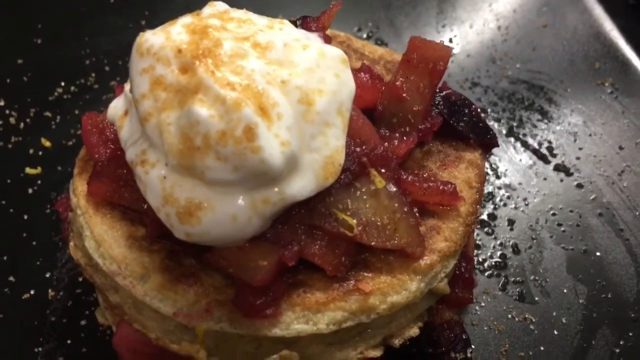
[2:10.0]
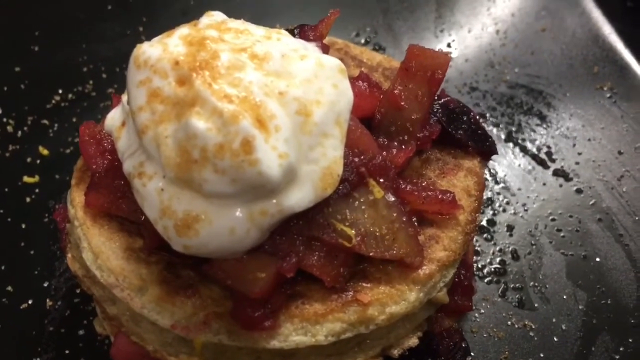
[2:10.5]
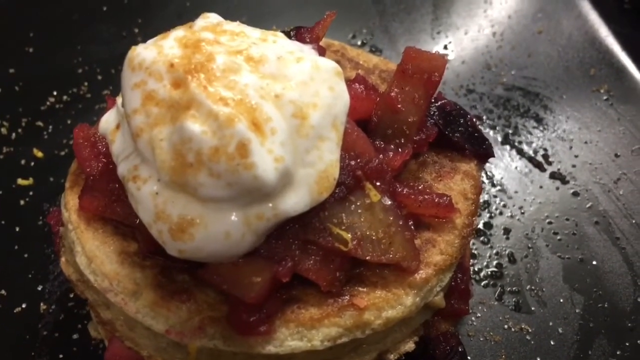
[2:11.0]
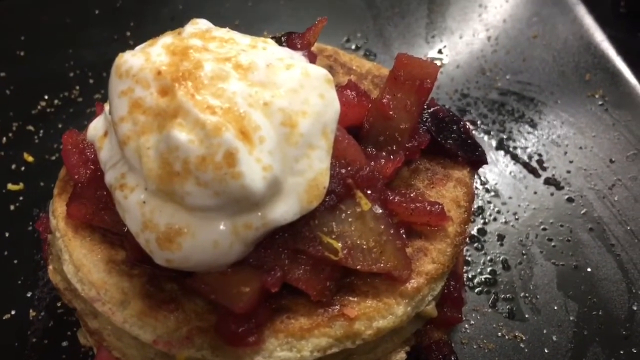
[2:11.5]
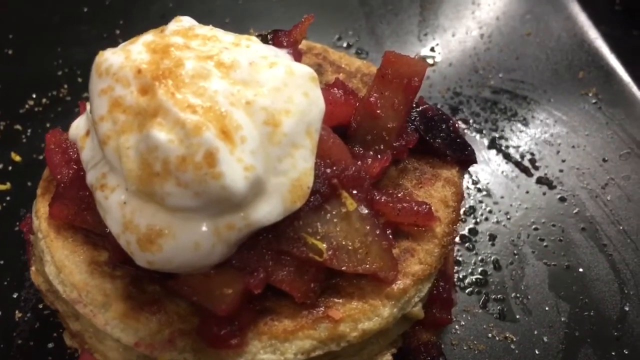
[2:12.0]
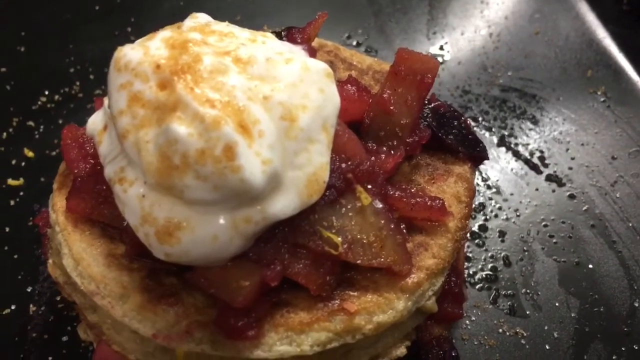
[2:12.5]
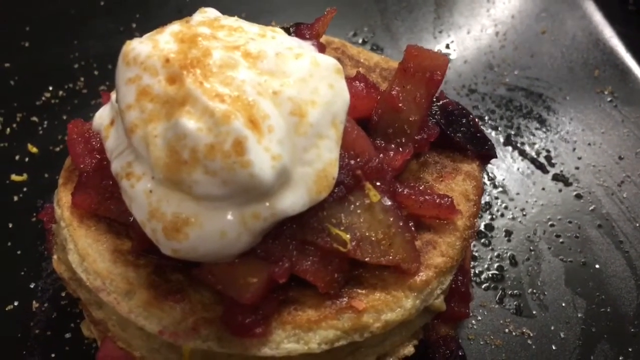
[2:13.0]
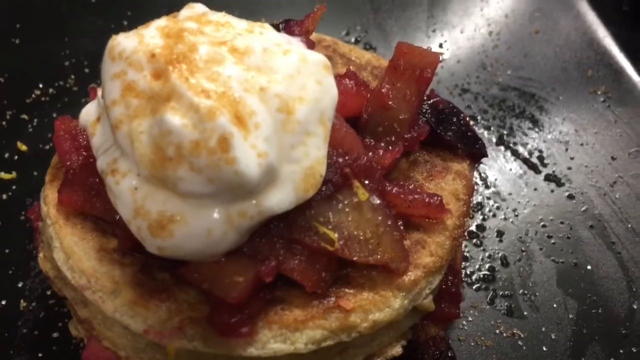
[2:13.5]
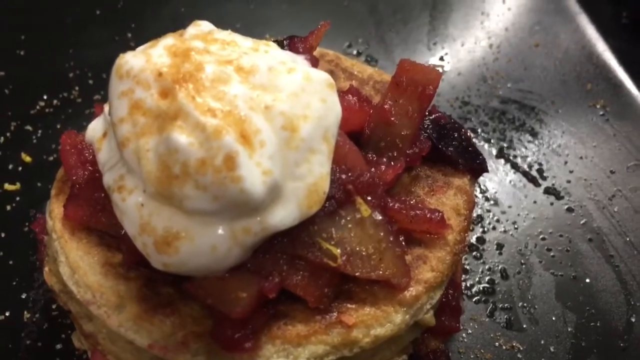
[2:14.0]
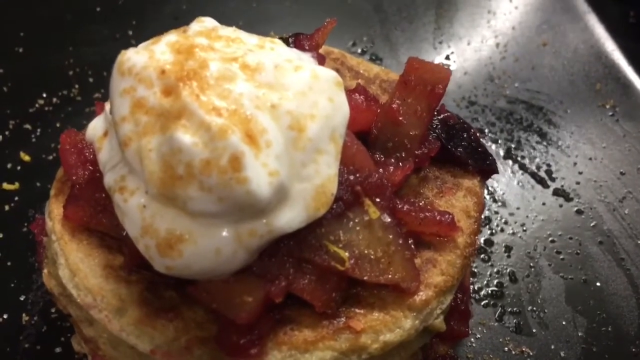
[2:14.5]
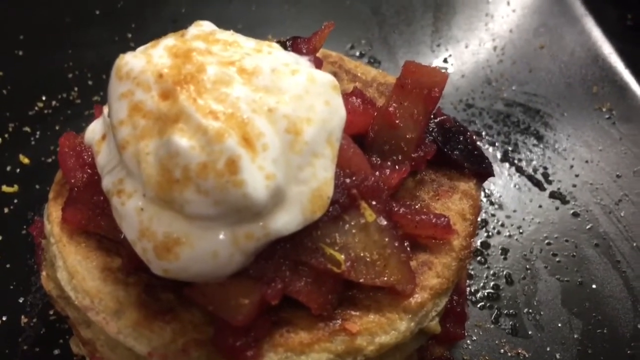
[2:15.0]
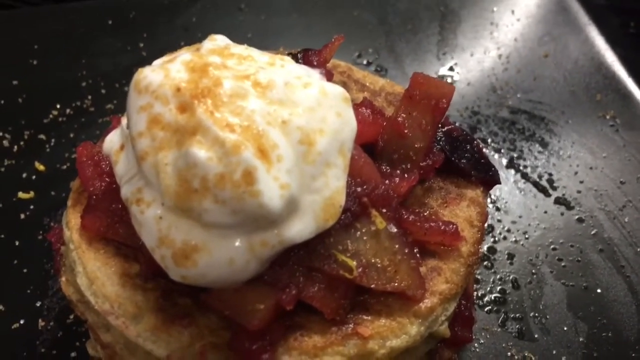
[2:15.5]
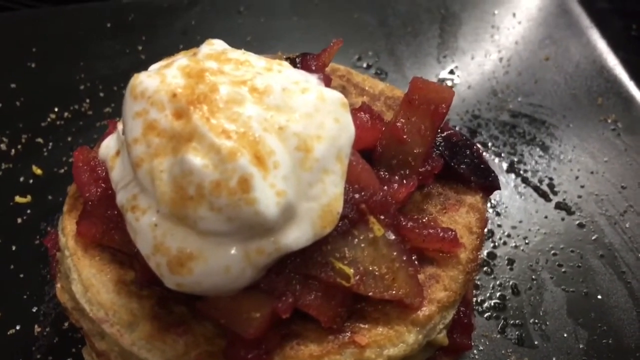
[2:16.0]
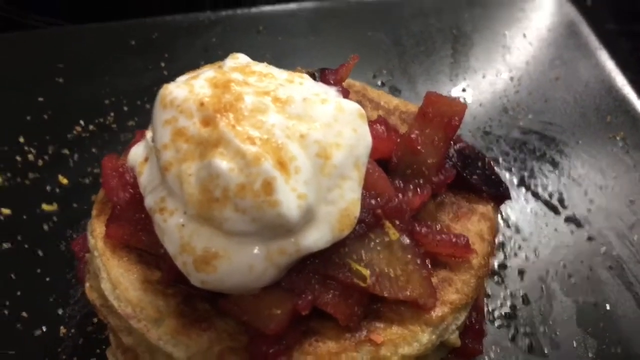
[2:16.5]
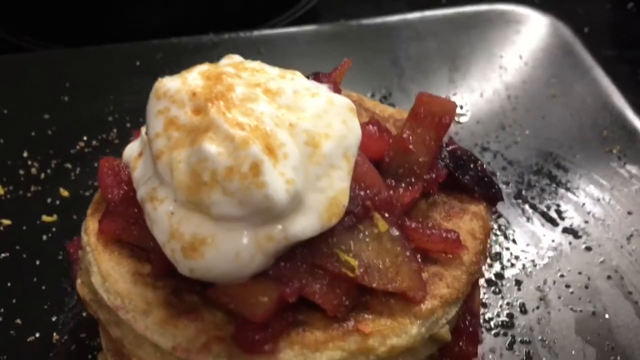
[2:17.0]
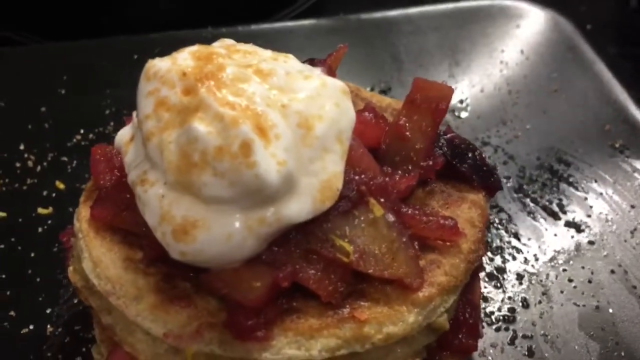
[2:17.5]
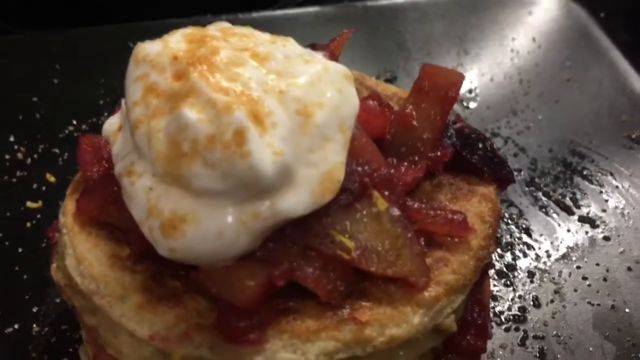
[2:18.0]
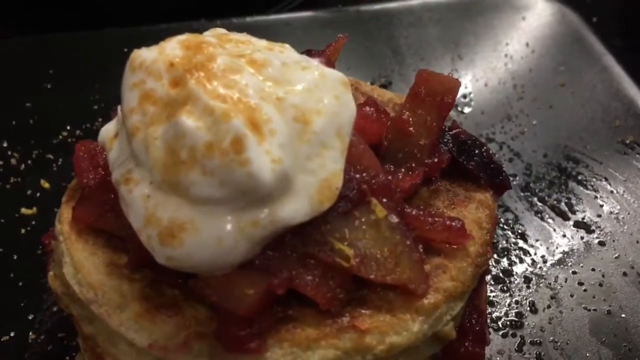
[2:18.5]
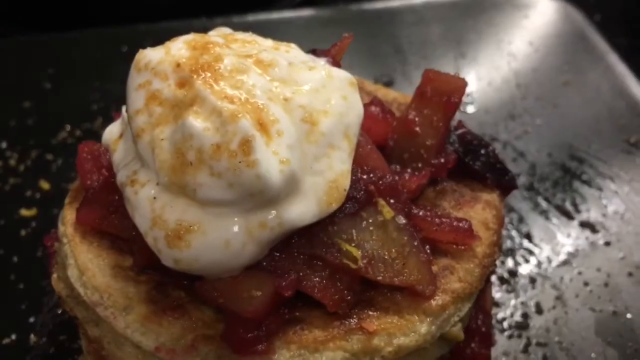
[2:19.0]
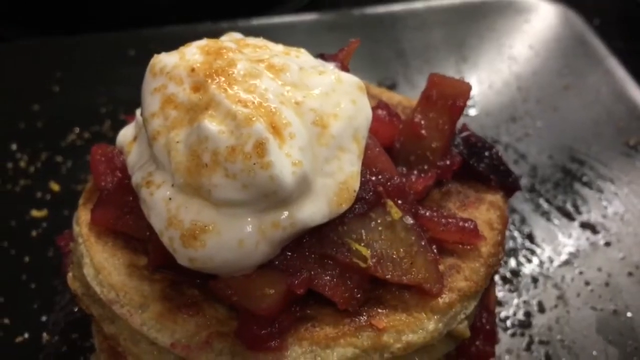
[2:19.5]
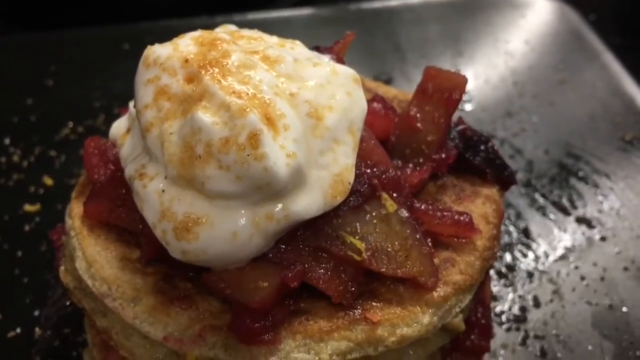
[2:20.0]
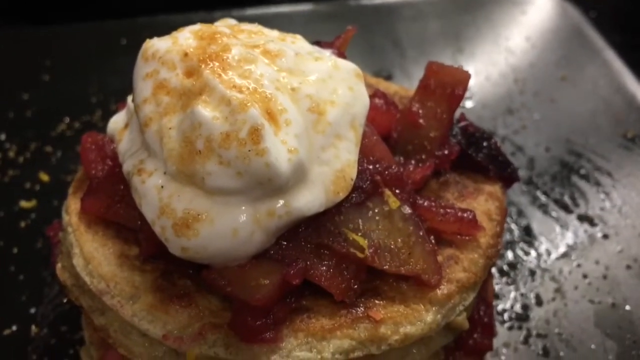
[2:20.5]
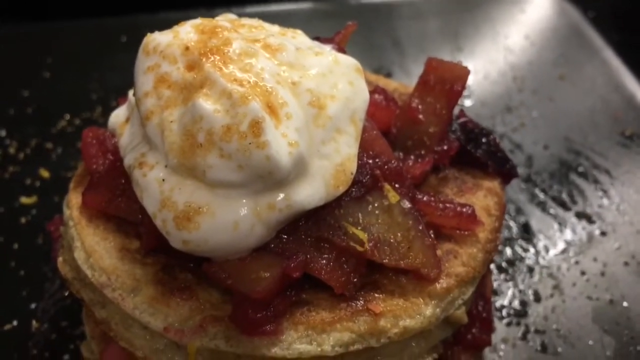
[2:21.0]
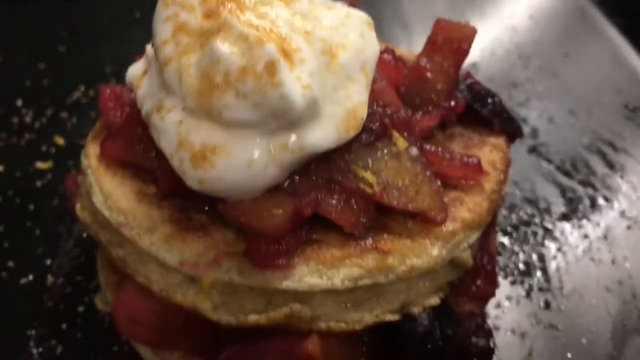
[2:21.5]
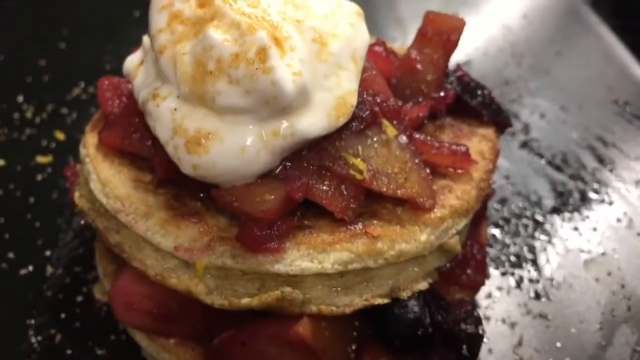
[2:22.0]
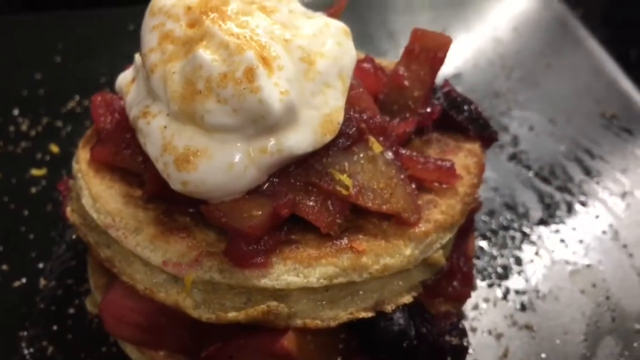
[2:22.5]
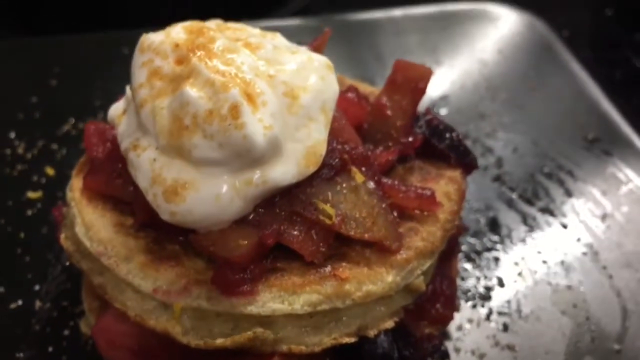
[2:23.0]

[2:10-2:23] On a large, black, glossy plate, the camera is zoomed in on the breakfast dish in the middle: two round, yellowish-brown pancakes stacked on top of each other. Between the two slices is a red fruit compote that looks like it has chopped caramelized fruit such as strawberries, blueberries, peaches and other fruit. More of the fruit mixture is on top of the pancake, along with a large scoop of what looks like vanilla ice cream. A light brown seasoning of some sort is sprinkled on top, maybe light brown sugar or maybe ground-up toasted coconut. The camera zooms in on the dish.